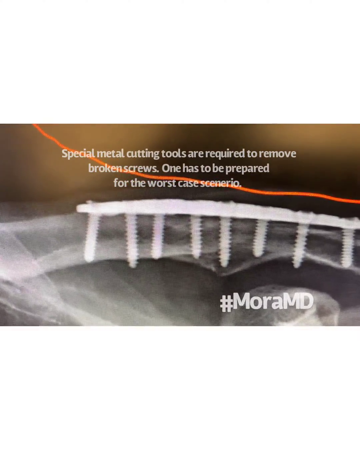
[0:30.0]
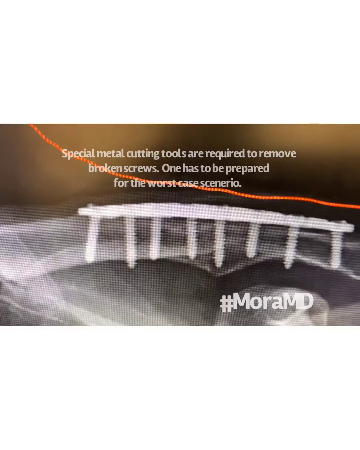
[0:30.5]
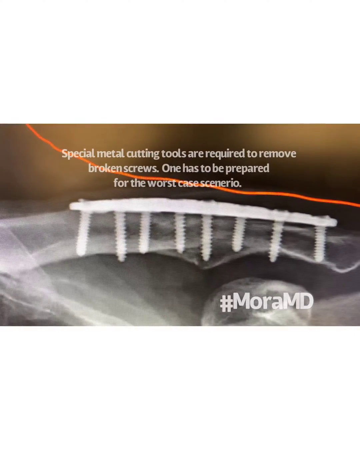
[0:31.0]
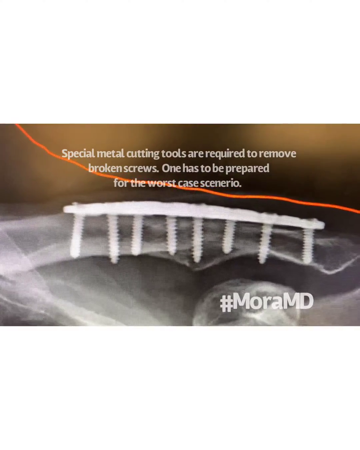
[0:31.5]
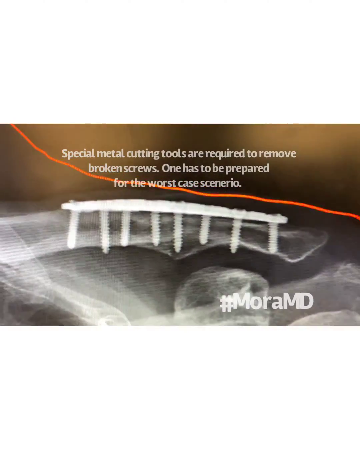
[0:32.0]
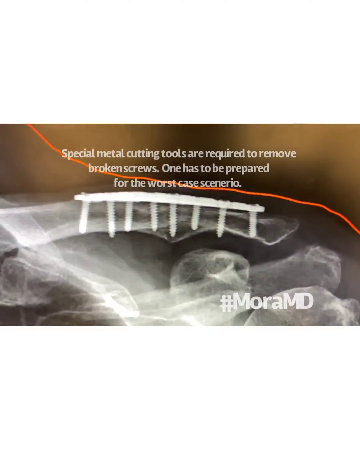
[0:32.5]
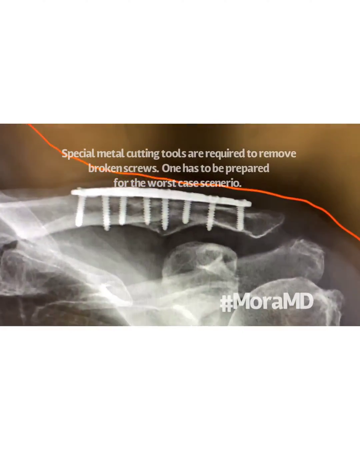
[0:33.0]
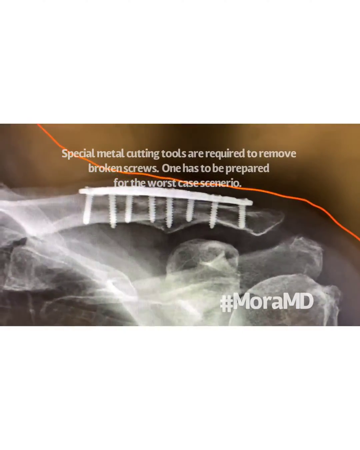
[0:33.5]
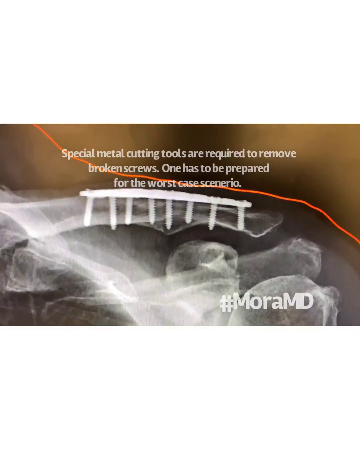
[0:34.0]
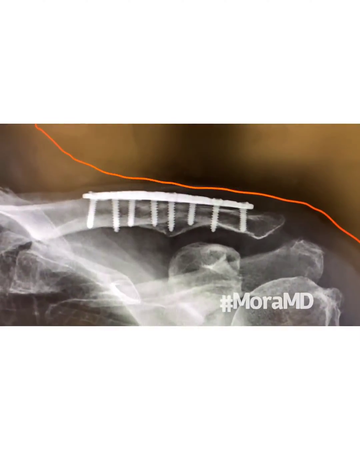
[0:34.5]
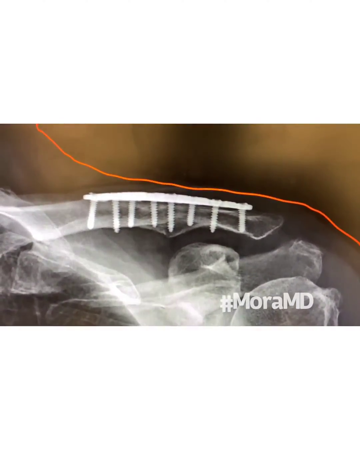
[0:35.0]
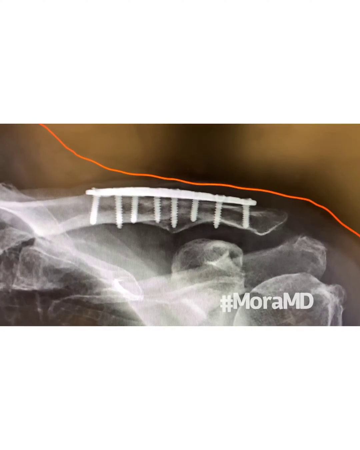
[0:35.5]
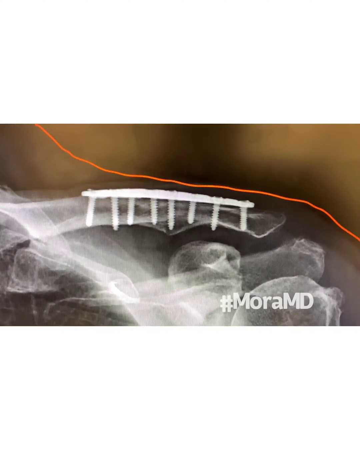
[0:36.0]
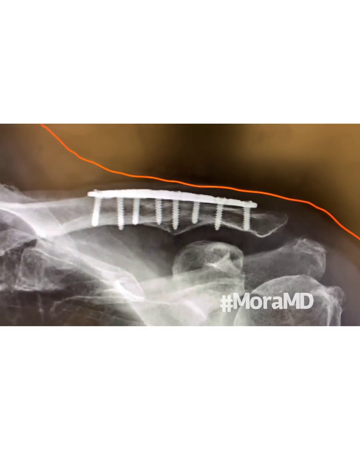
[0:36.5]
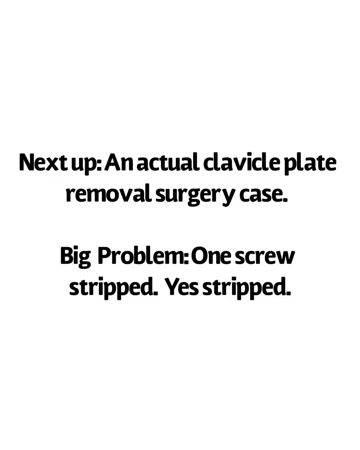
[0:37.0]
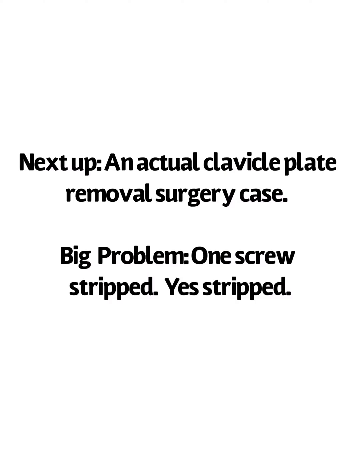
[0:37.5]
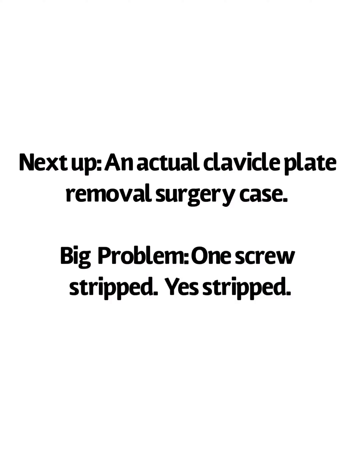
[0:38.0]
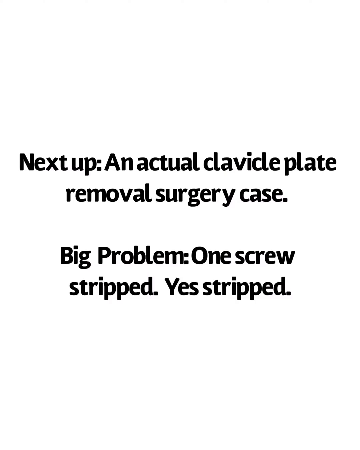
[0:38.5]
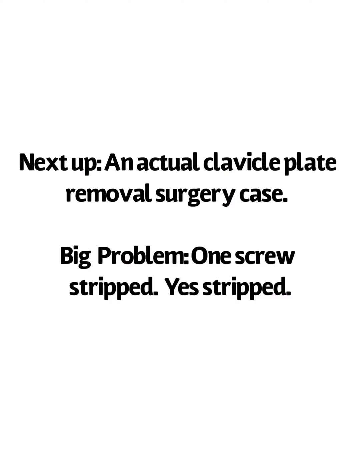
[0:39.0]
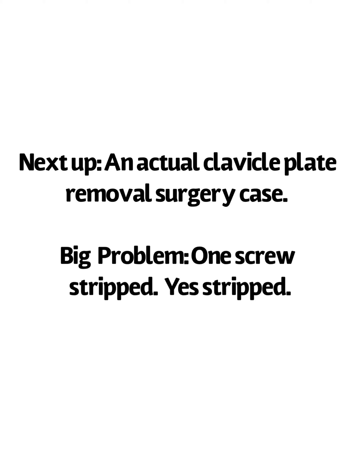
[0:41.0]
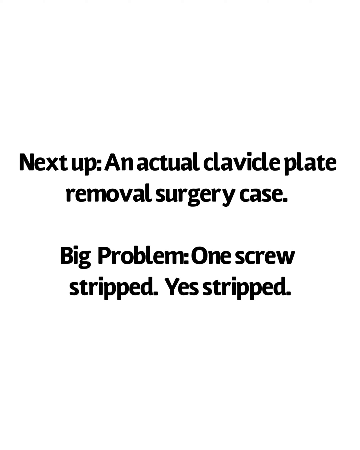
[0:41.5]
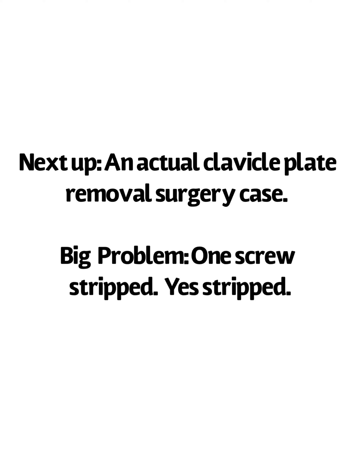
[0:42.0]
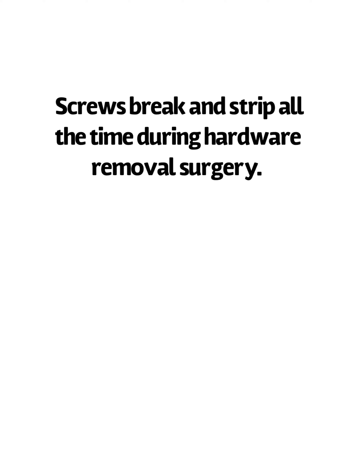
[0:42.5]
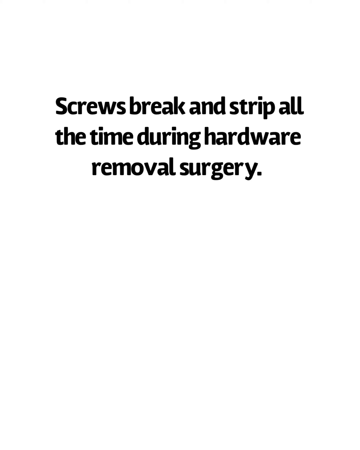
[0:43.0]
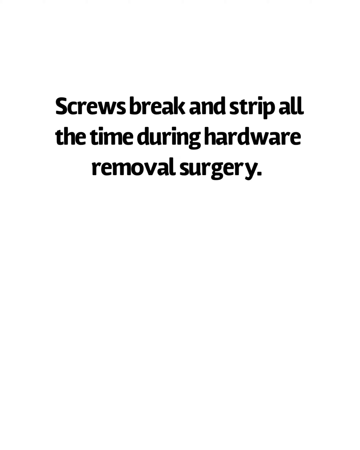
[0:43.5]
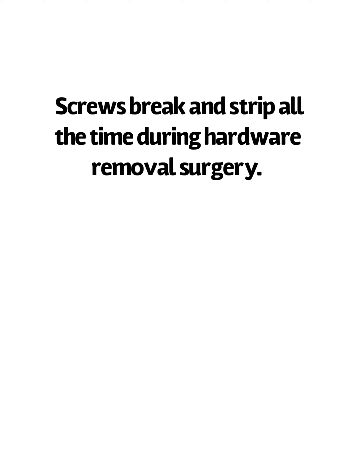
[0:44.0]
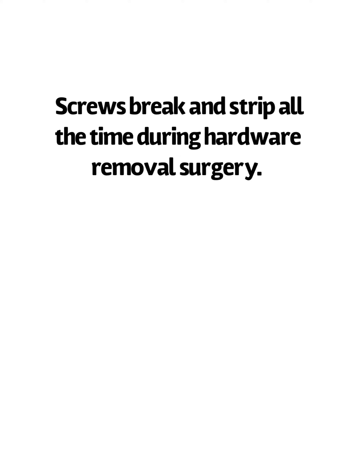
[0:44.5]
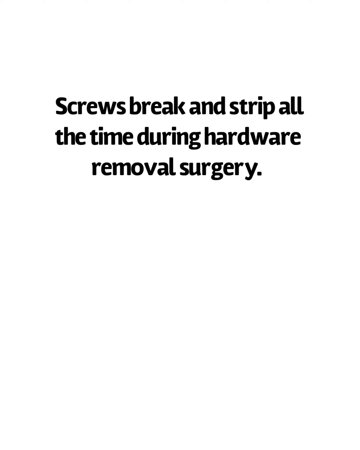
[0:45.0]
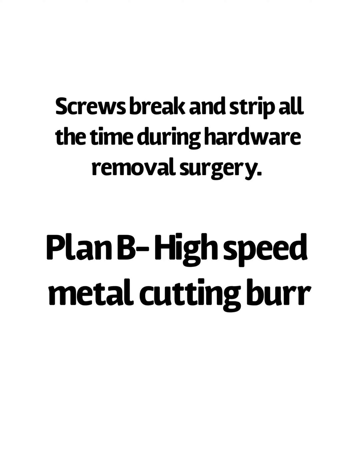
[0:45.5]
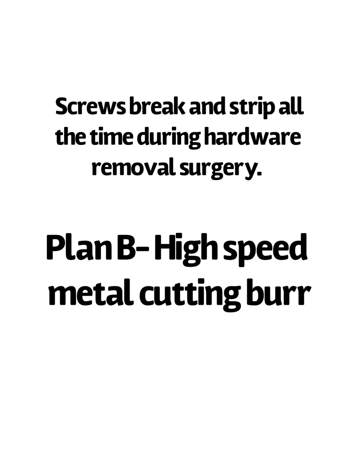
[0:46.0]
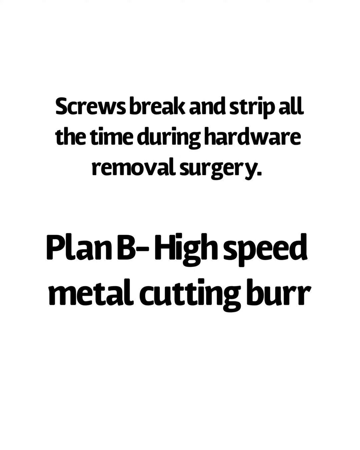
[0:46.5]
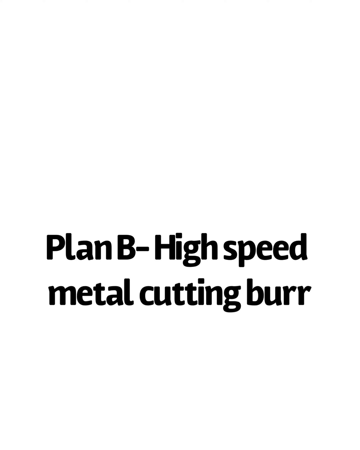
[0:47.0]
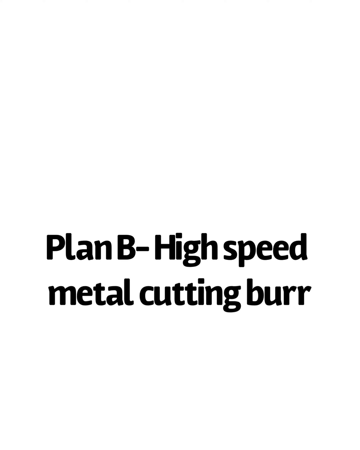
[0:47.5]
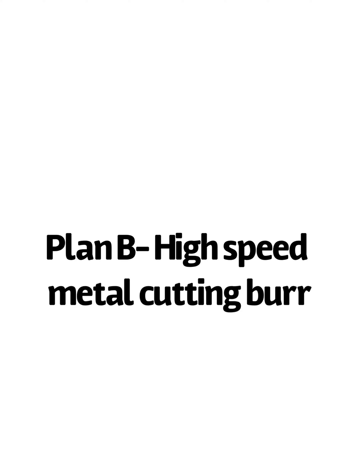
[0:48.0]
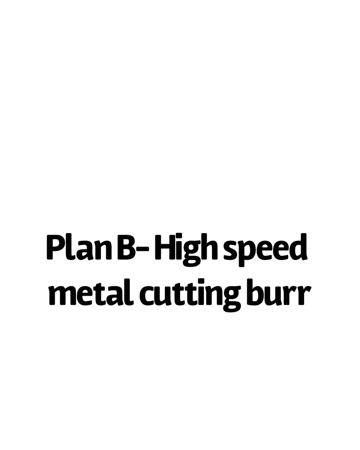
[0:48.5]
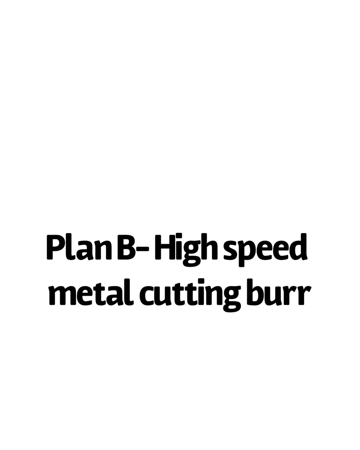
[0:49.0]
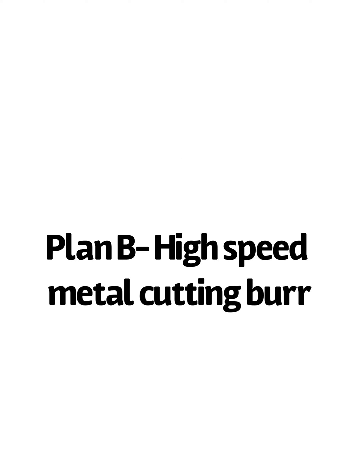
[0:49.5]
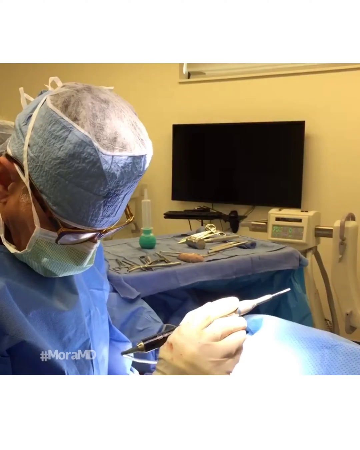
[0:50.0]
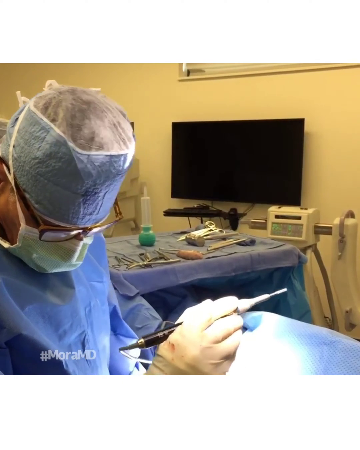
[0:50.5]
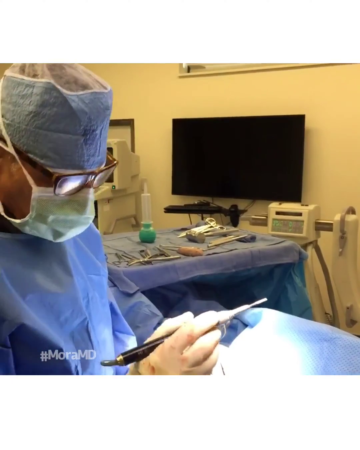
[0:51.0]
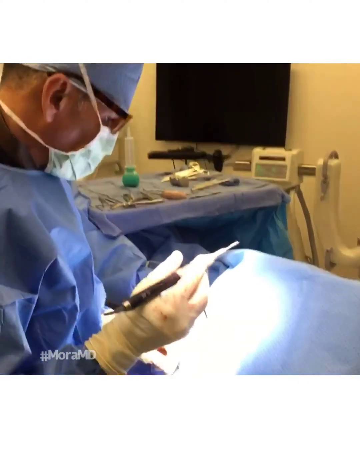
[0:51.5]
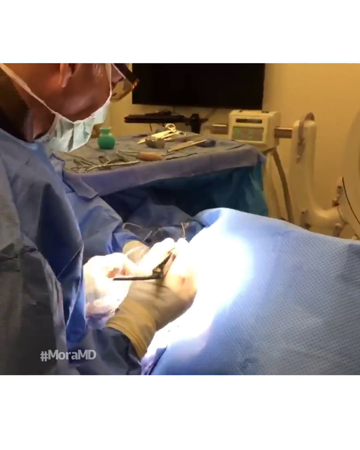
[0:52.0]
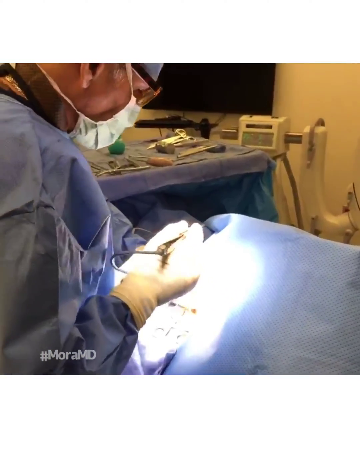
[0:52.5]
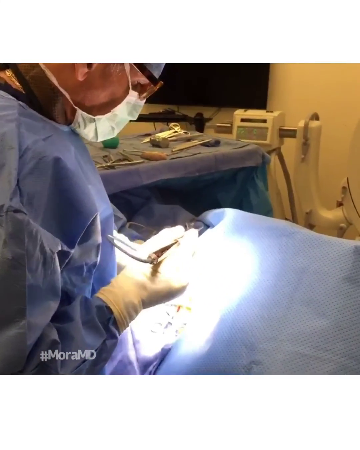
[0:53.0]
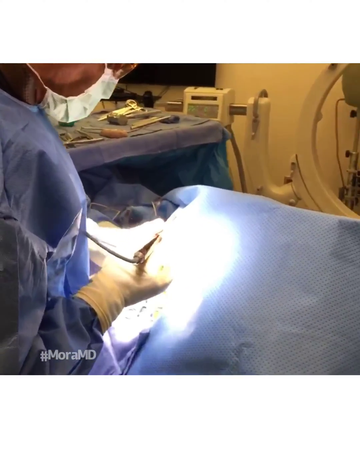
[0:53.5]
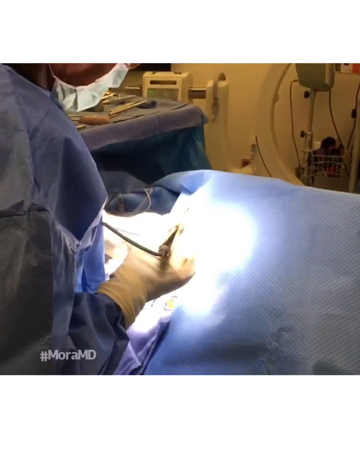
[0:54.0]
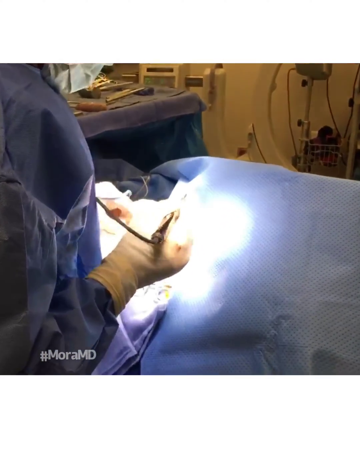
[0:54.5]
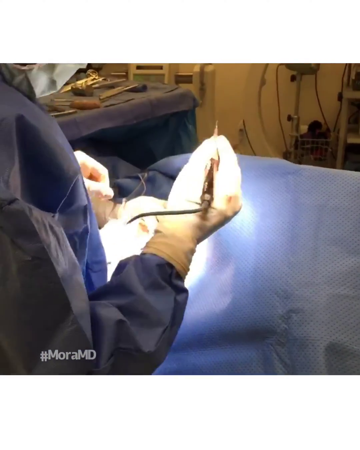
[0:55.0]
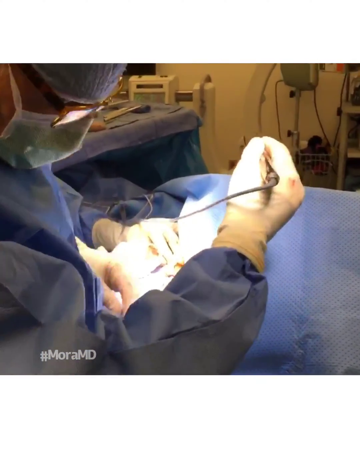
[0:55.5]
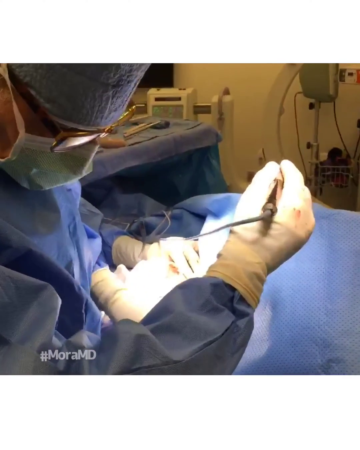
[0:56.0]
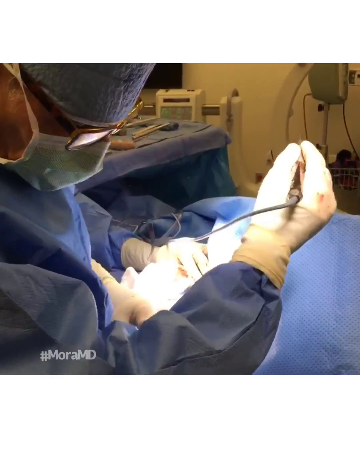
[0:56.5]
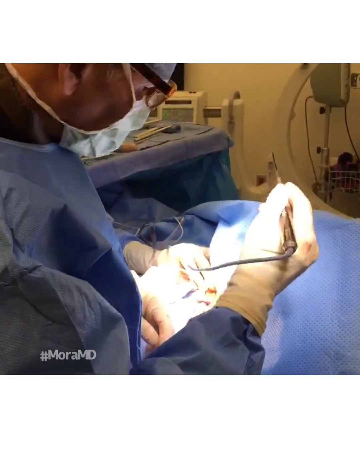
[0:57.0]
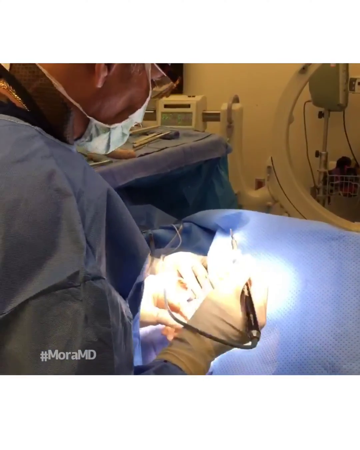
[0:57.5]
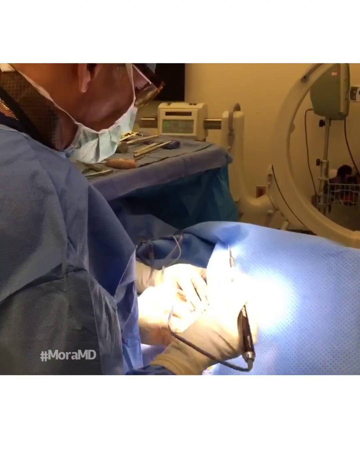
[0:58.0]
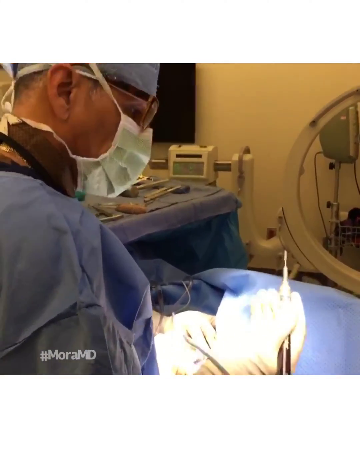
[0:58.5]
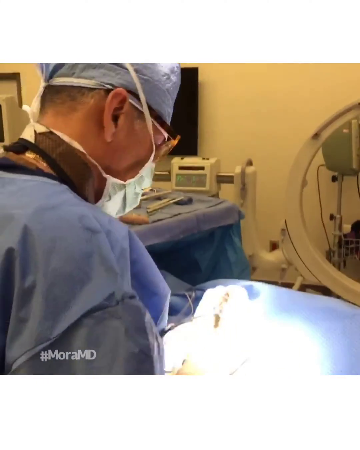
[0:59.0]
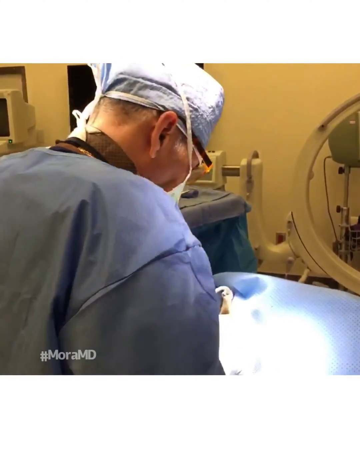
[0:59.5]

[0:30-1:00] The text about special metal cutting tools being required to remove broken screws and being prepared for the worst case scenario is on screen over an x-ray of a clavicle bone, a shoulder bone. The camera moves quite a bit. Text cards follow: "Next up, an actual clavicle plate removal surgery case." "Big problem, one screw stripped." The text is black on a white background in portrait format, with large areas of black screen on either side. More text reads "screws break and strip all the time during hardware removal surgery" and "Plan B high-speed metal cutting burr." The scene then moves to a surgery area, where a doctor in surgery scrubs, a mask and a hair covering holds in his right gloved hand what appears to be a surgical tool with a cutting edge while looking down.